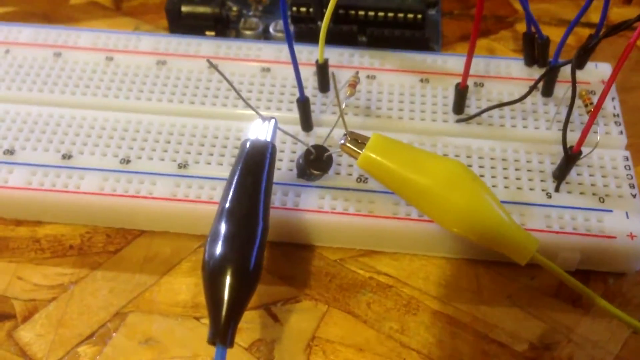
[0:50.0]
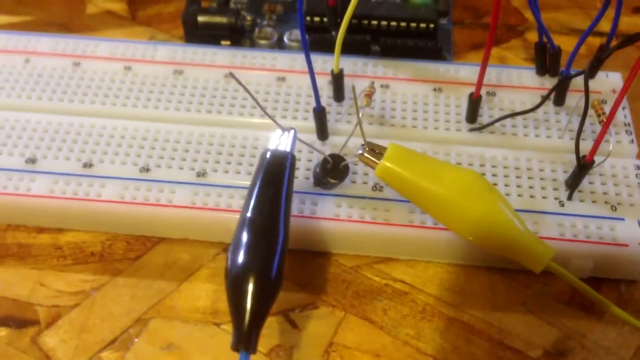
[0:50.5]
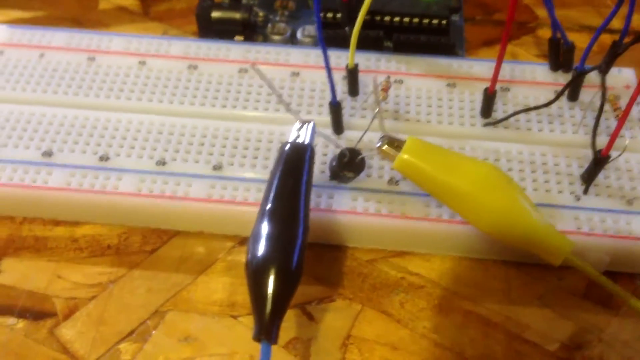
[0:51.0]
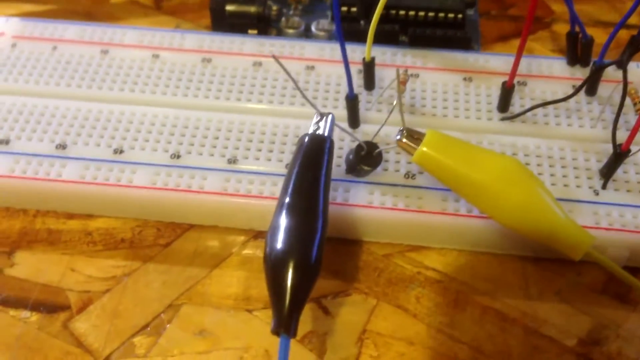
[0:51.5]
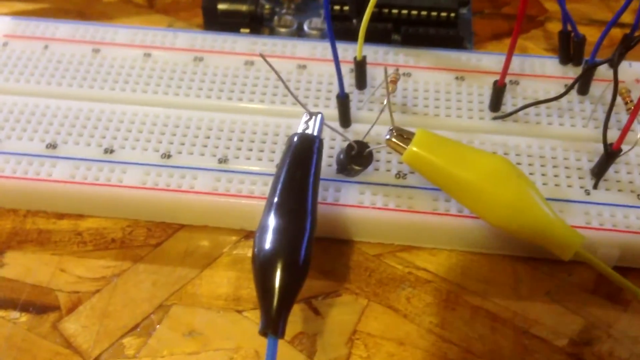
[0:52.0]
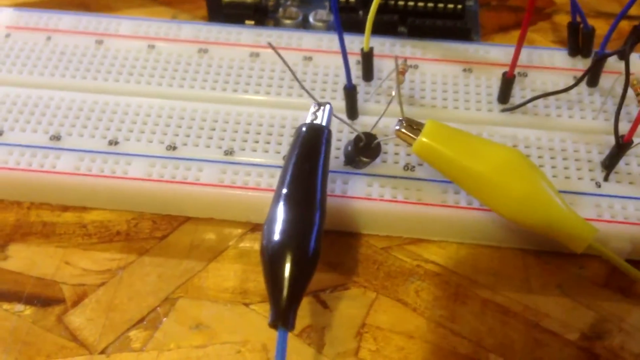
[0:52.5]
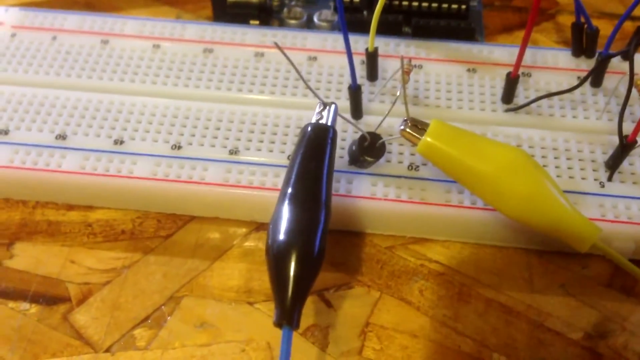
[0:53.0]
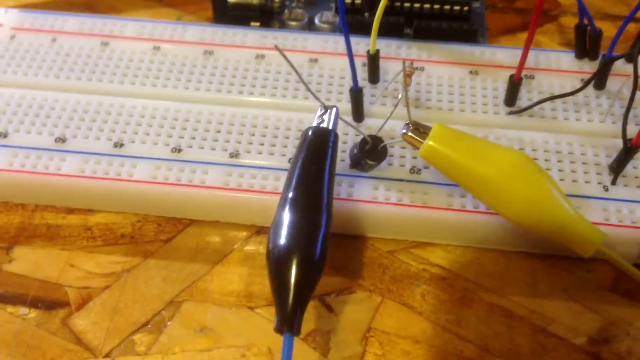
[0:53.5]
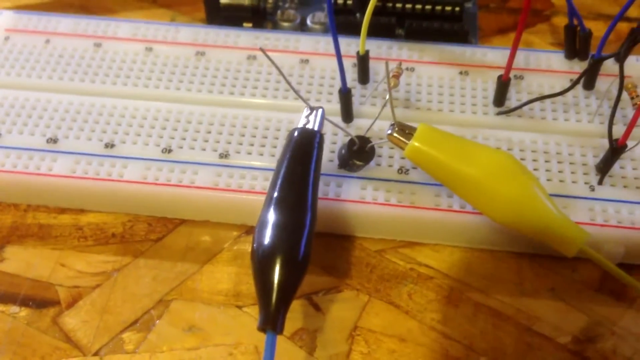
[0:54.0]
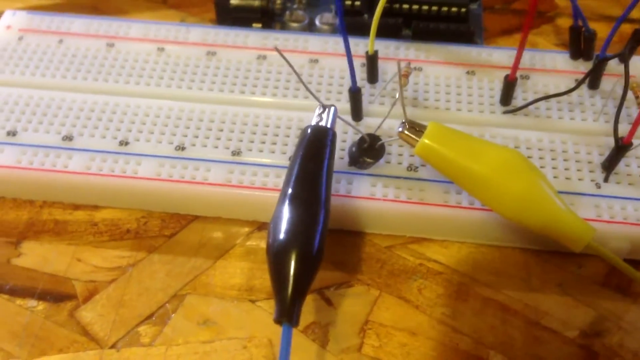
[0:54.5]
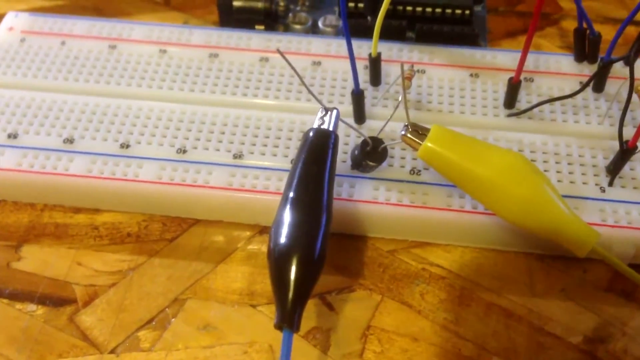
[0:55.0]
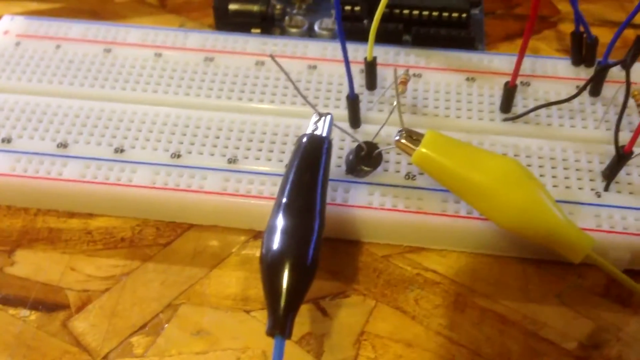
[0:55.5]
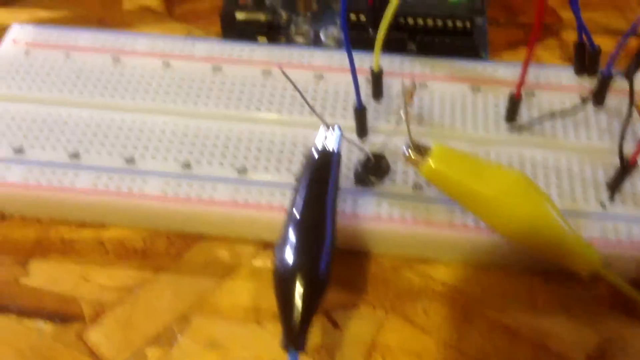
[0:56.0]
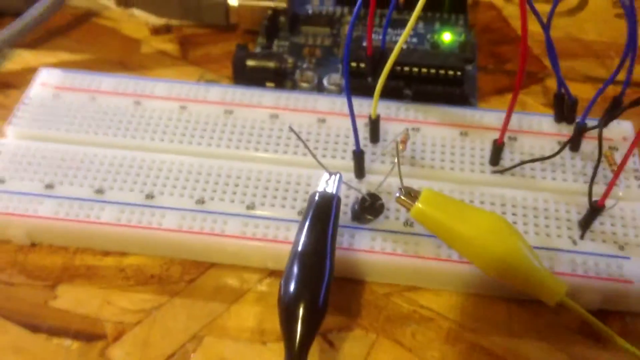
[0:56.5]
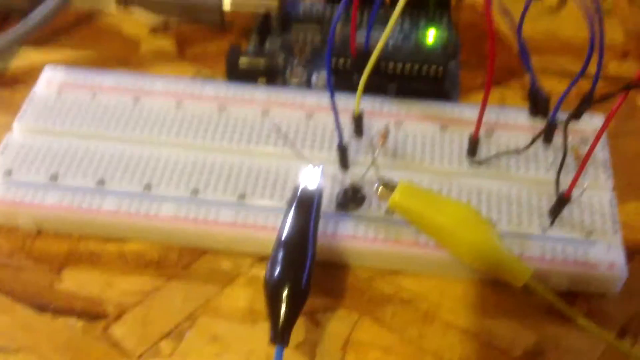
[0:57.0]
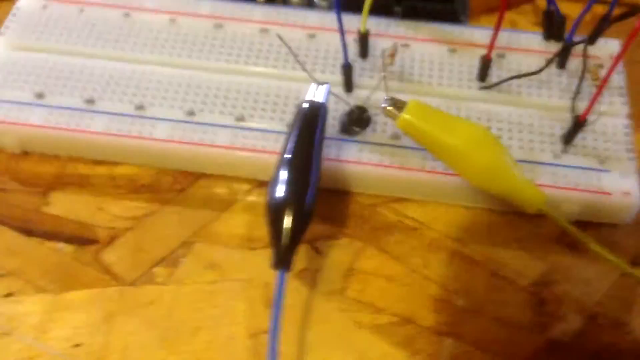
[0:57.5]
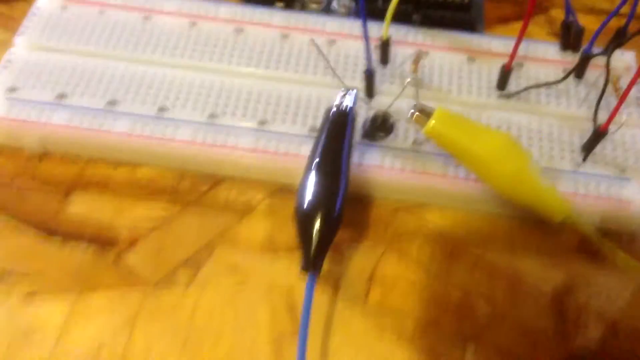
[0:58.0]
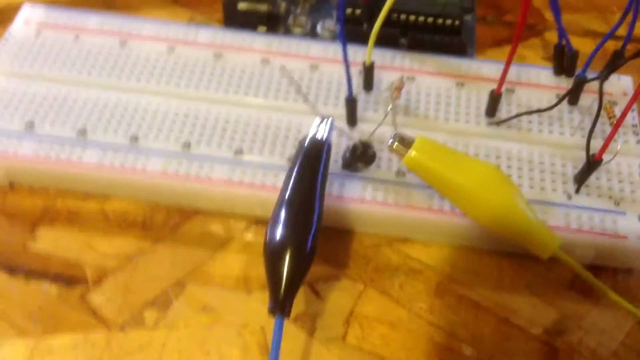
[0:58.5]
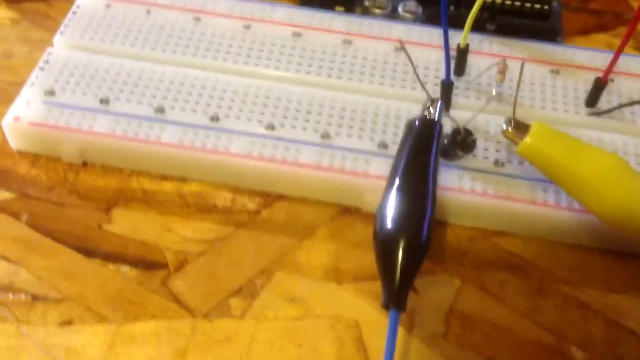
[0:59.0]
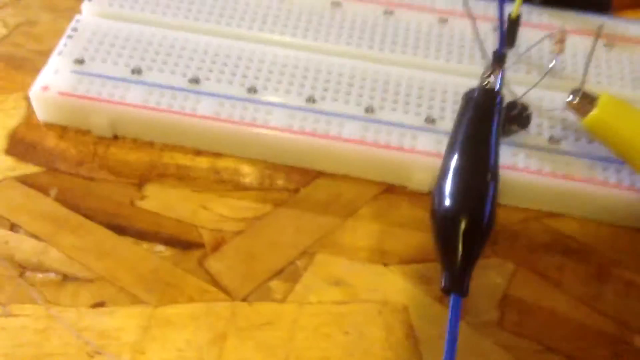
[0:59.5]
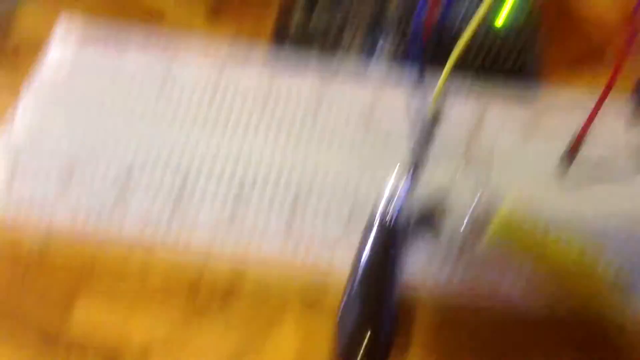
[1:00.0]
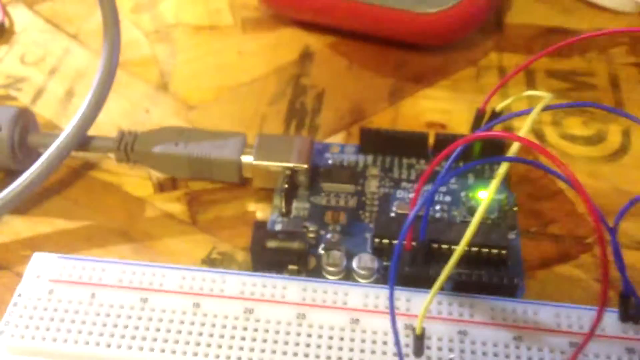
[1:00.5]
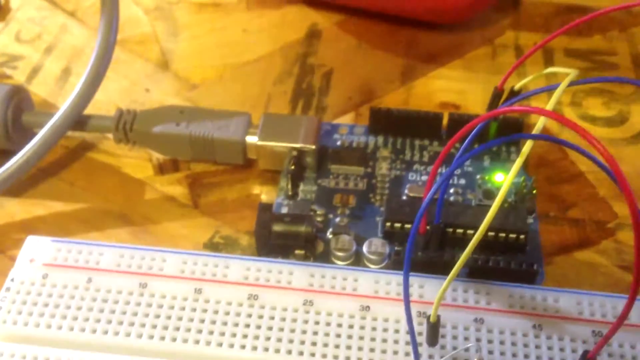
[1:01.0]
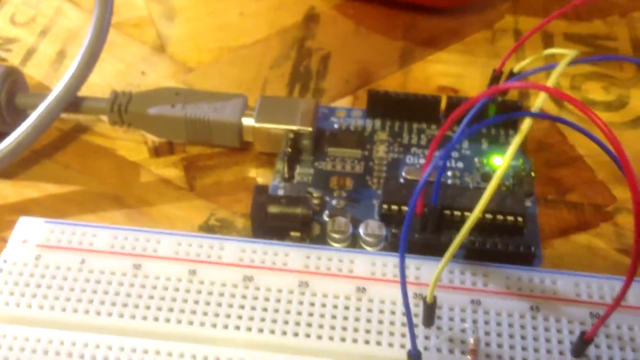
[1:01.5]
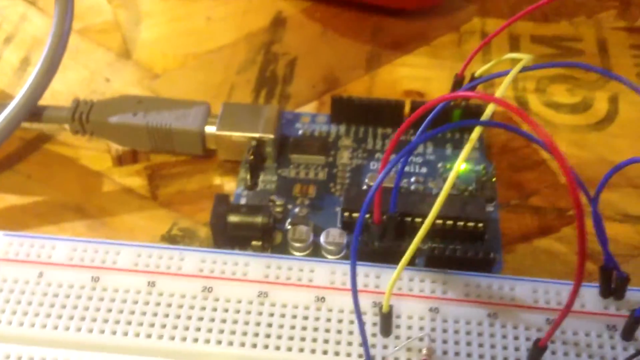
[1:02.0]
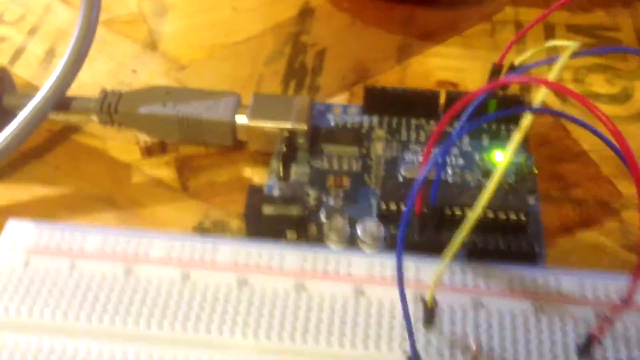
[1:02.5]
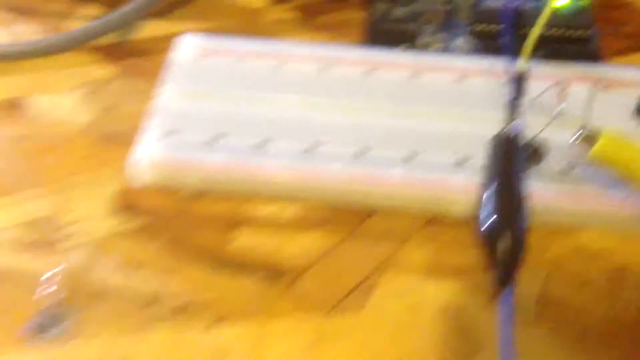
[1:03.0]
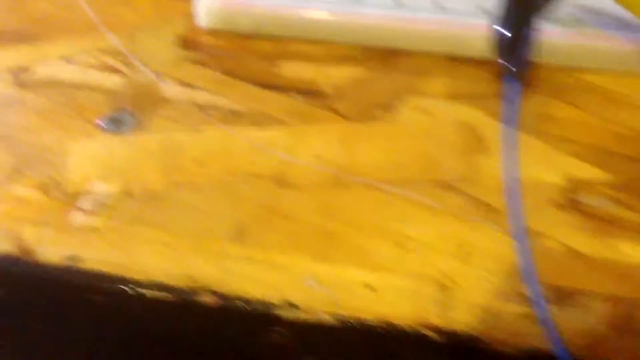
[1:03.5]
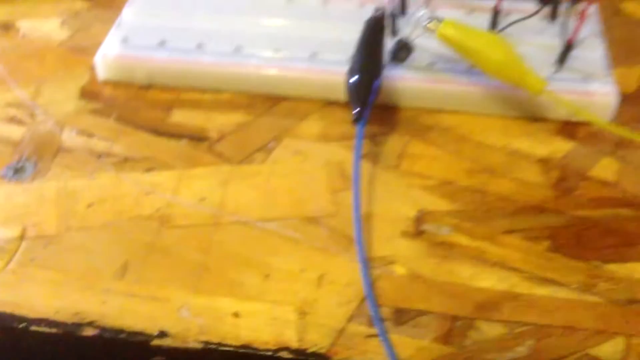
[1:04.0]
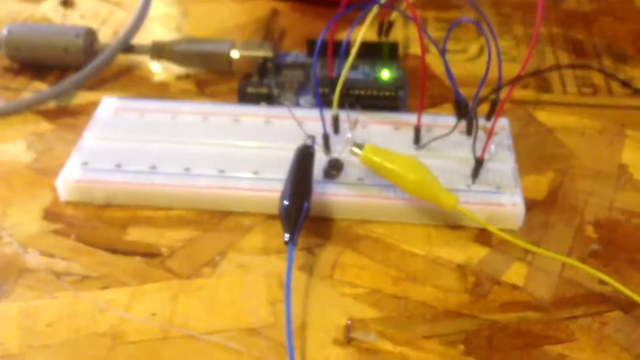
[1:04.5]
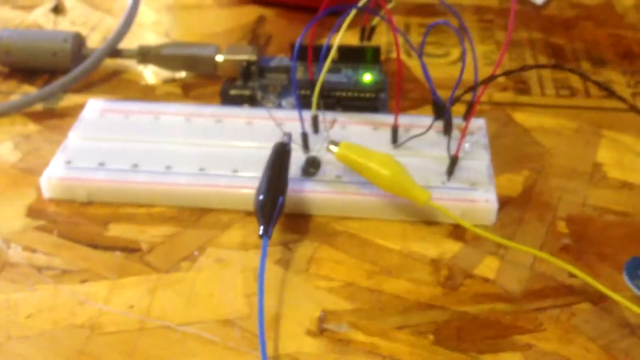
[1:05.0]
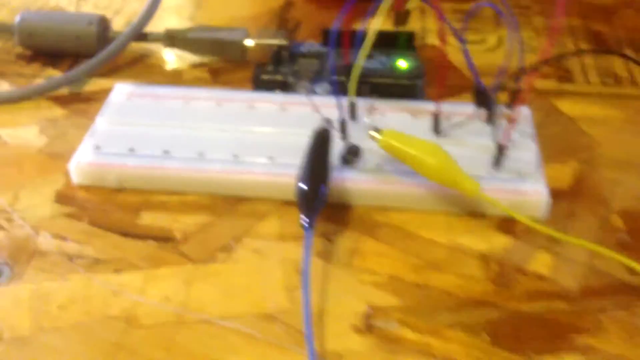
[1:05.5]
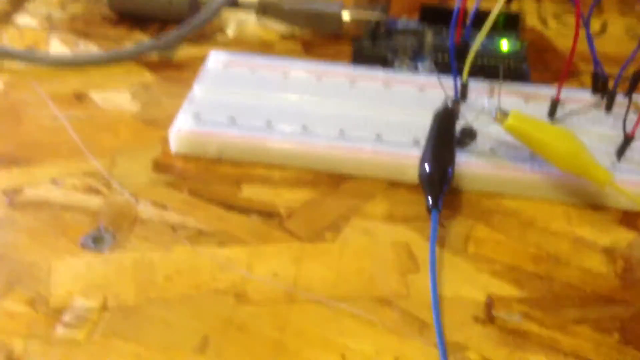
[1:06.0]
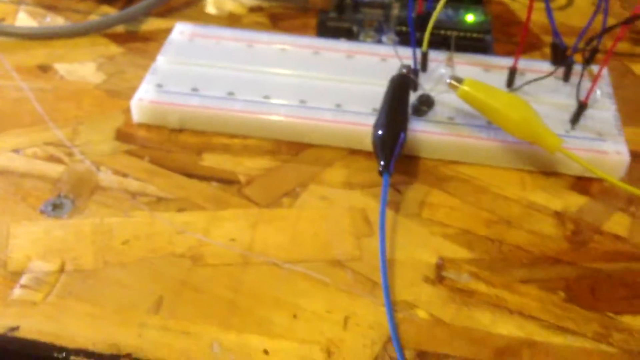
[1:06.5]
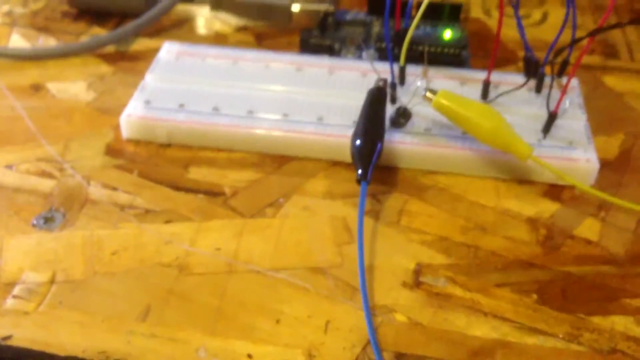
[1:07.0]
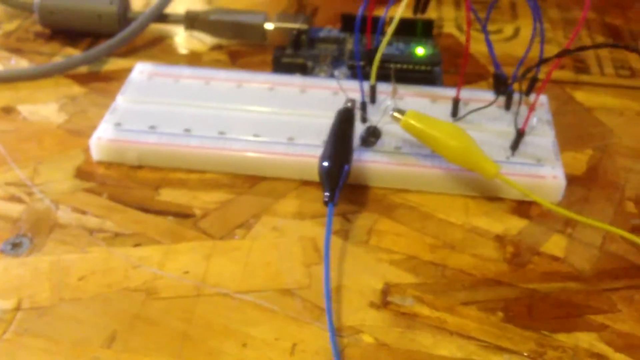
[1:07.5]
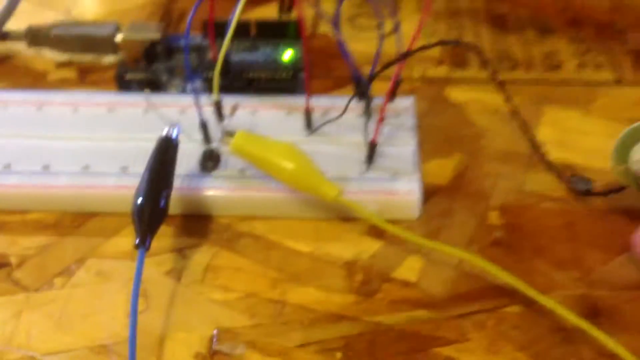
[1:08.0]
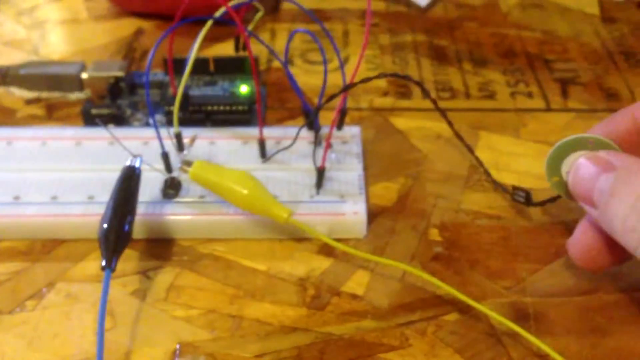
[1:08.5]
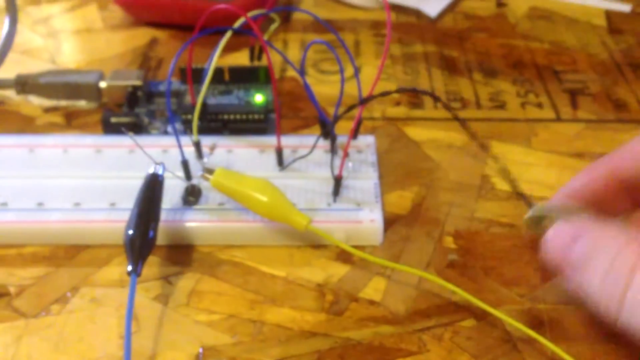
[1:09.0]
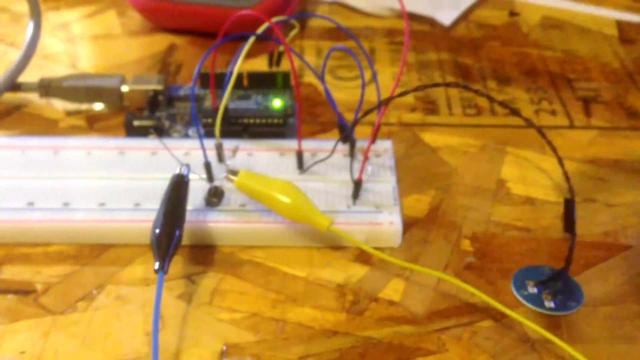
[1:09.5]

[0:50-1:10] The clip of the multimeter on the table is now connected to one of the cables attached to the multi-cable connector on the table; it seems to be a sensor reading the current. A small panel on the table shows a green light. There is a connector and a fuse, with the fuse connecting the red cable and the blue cable in between.